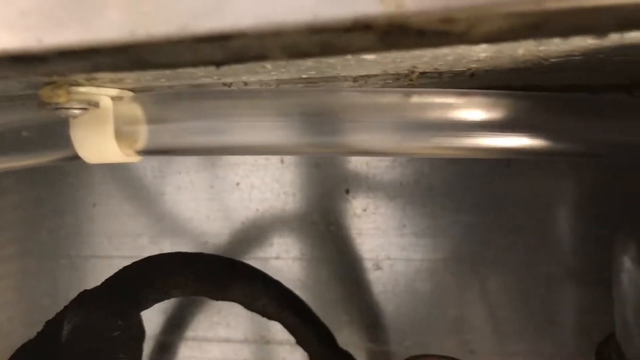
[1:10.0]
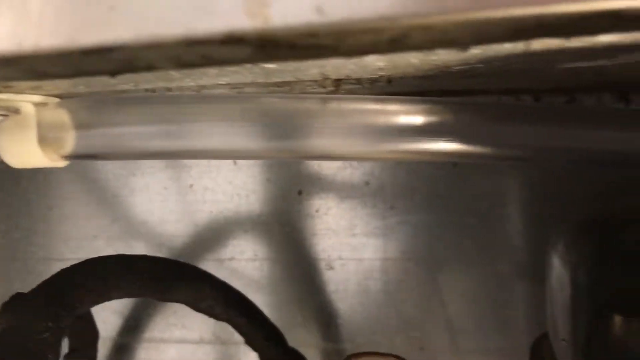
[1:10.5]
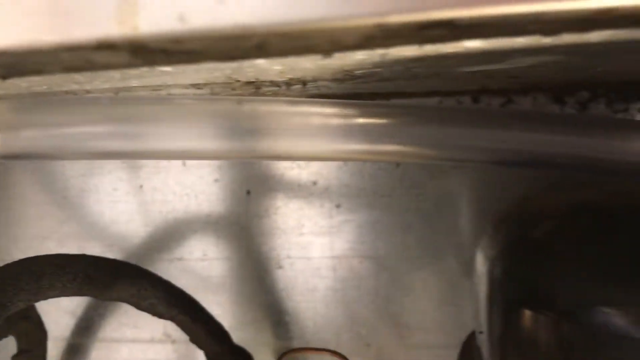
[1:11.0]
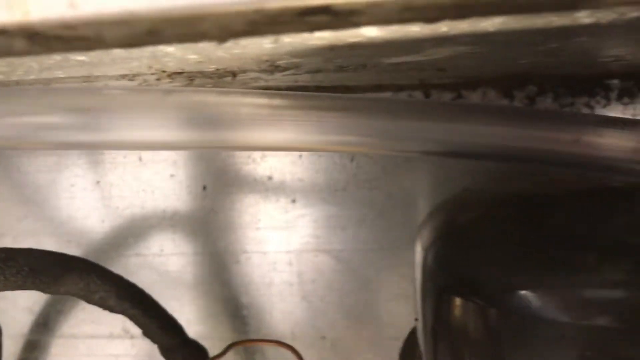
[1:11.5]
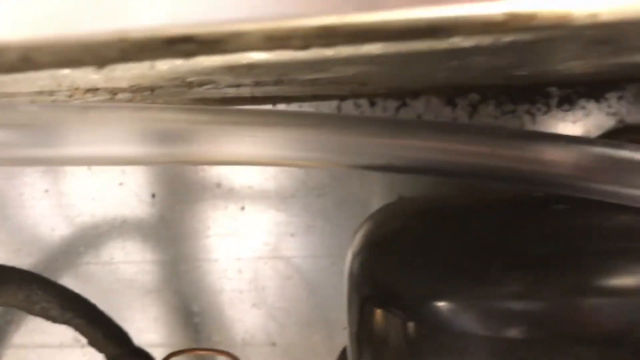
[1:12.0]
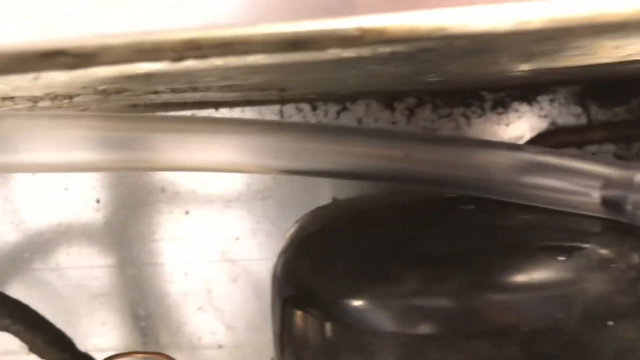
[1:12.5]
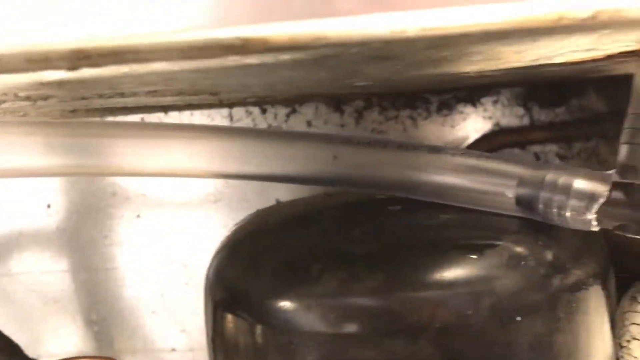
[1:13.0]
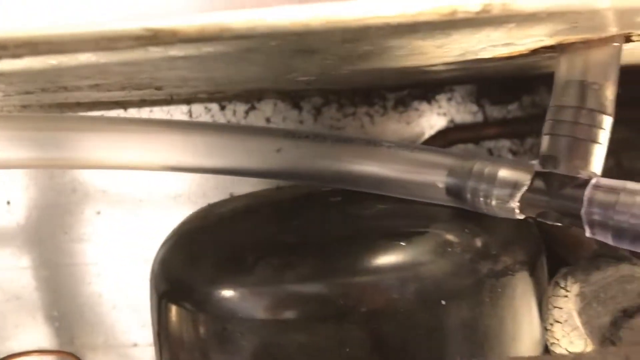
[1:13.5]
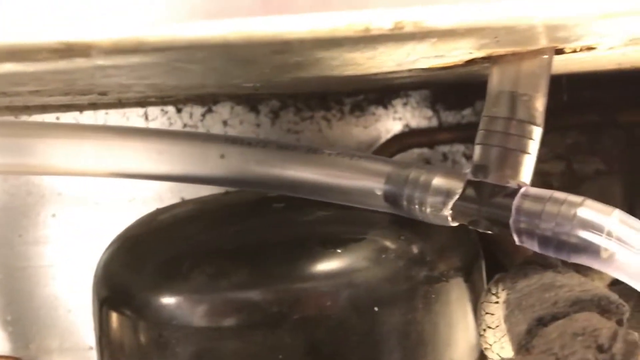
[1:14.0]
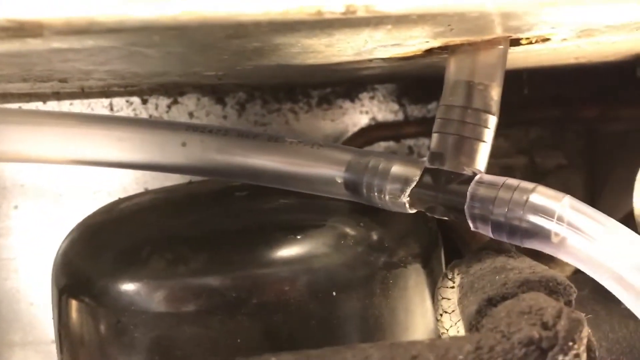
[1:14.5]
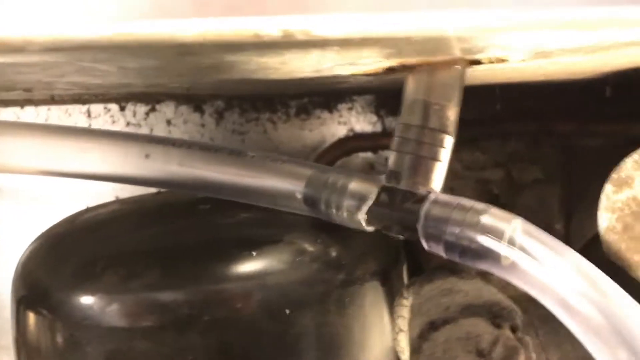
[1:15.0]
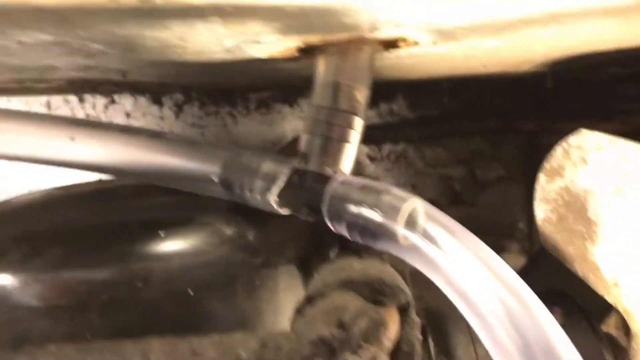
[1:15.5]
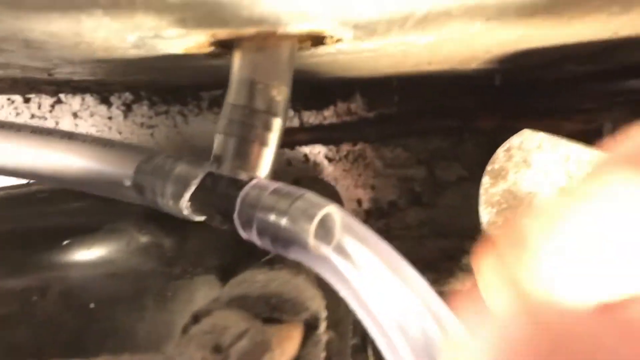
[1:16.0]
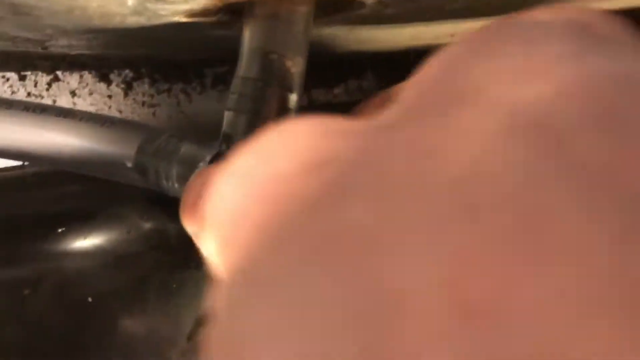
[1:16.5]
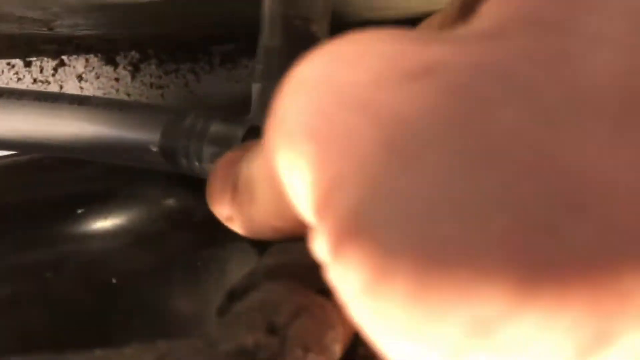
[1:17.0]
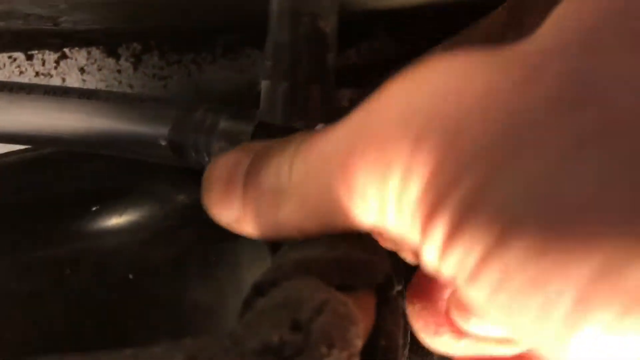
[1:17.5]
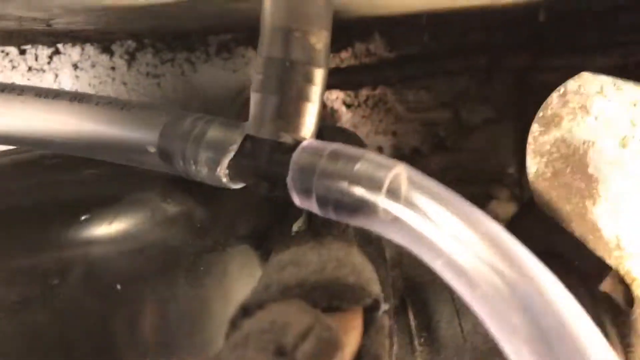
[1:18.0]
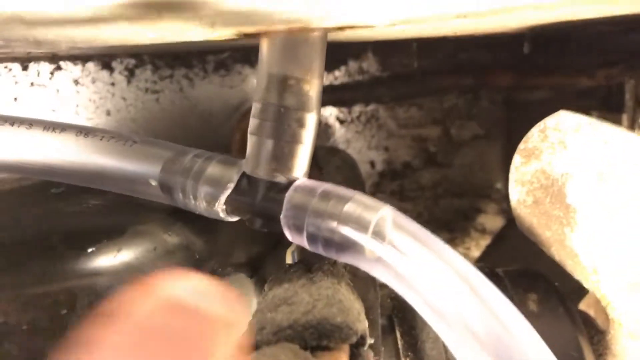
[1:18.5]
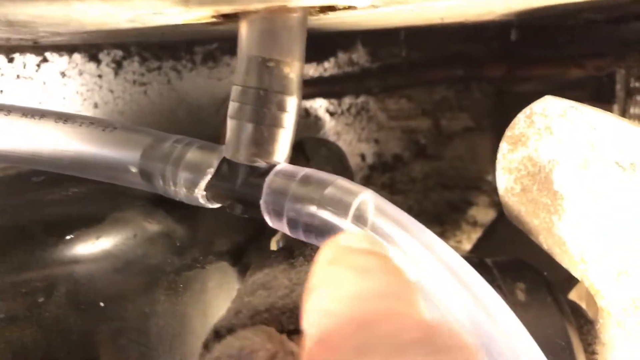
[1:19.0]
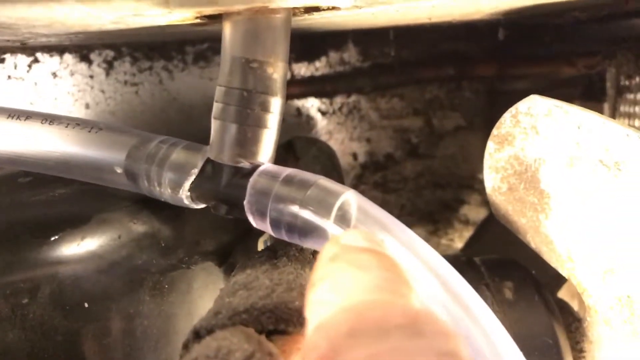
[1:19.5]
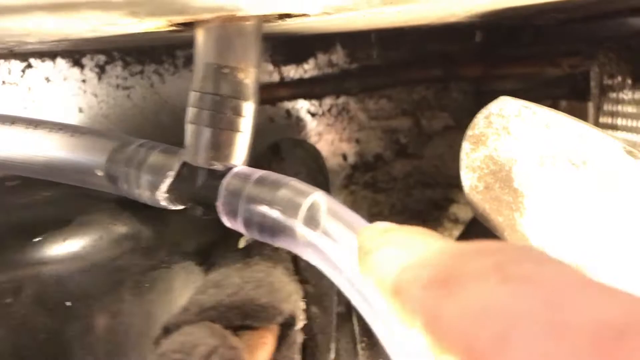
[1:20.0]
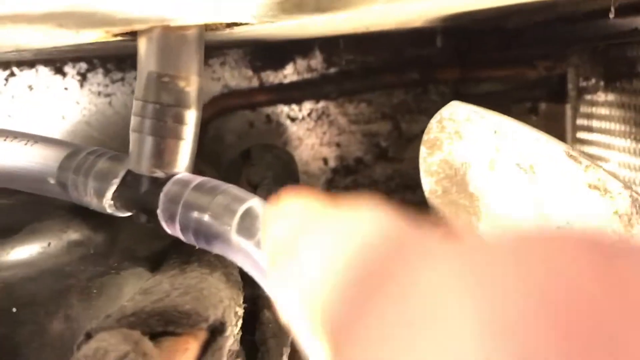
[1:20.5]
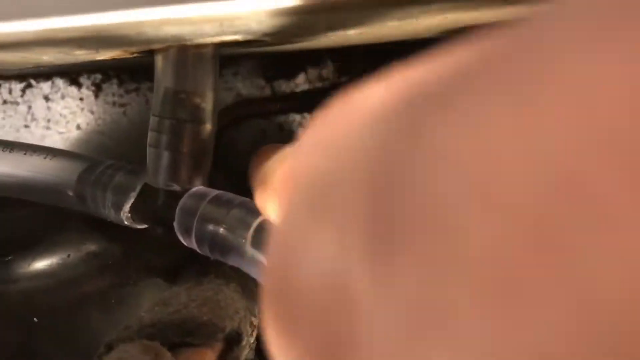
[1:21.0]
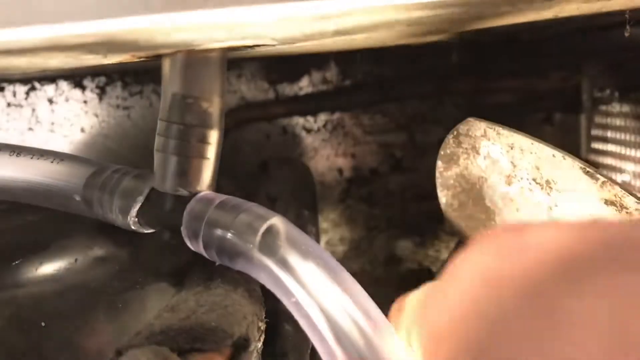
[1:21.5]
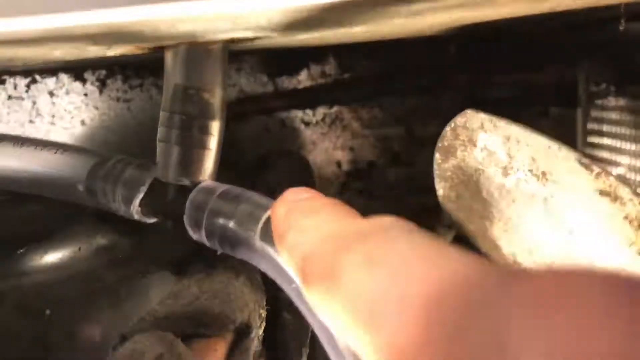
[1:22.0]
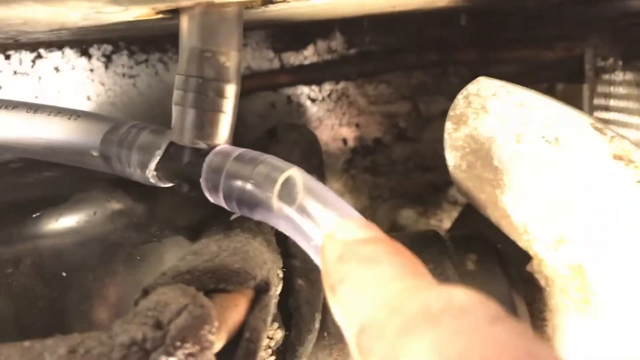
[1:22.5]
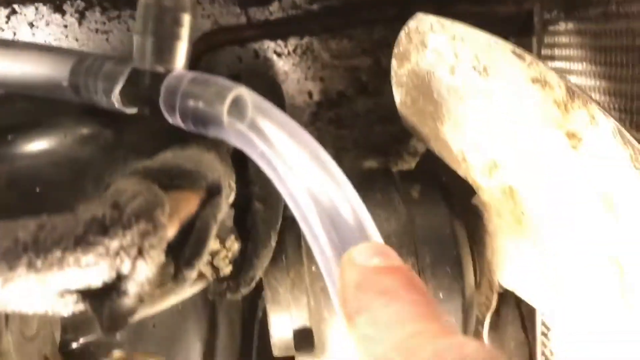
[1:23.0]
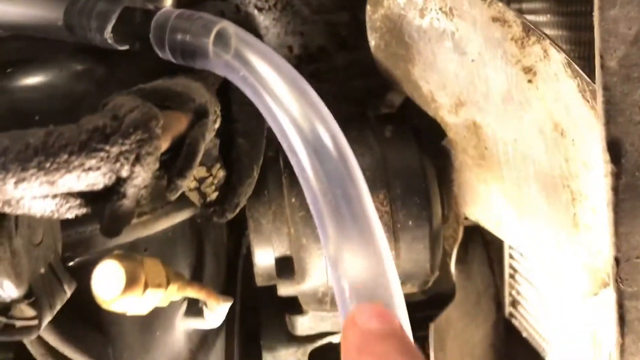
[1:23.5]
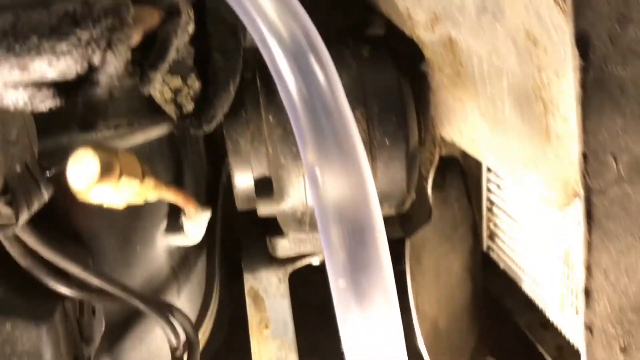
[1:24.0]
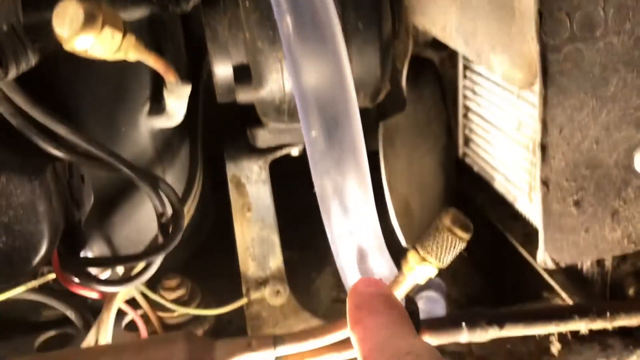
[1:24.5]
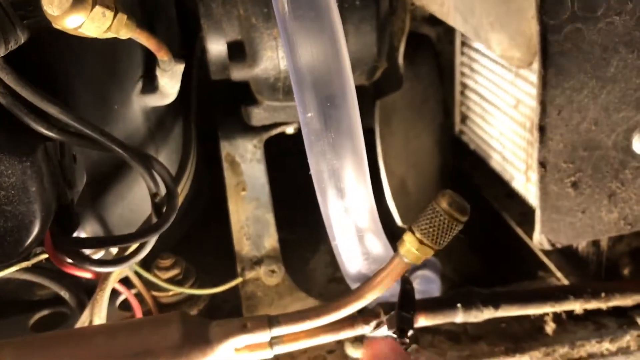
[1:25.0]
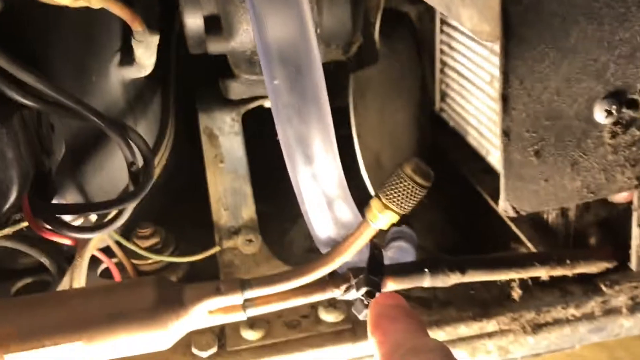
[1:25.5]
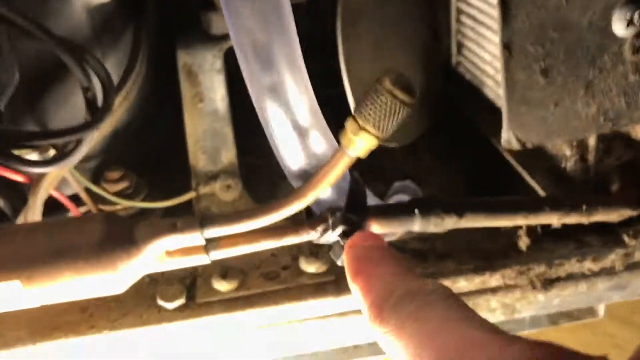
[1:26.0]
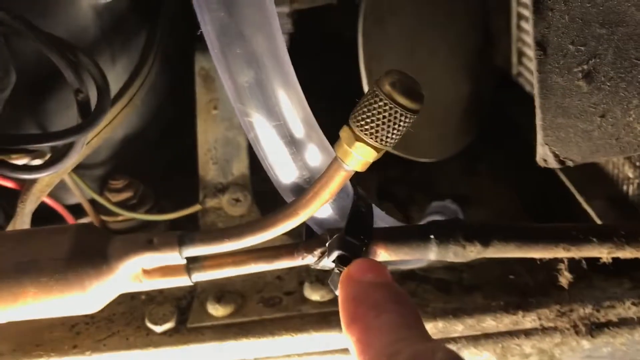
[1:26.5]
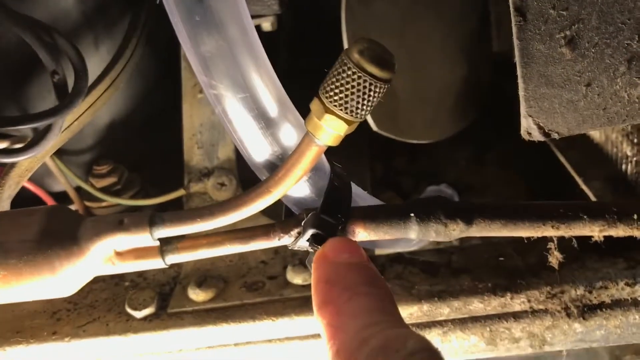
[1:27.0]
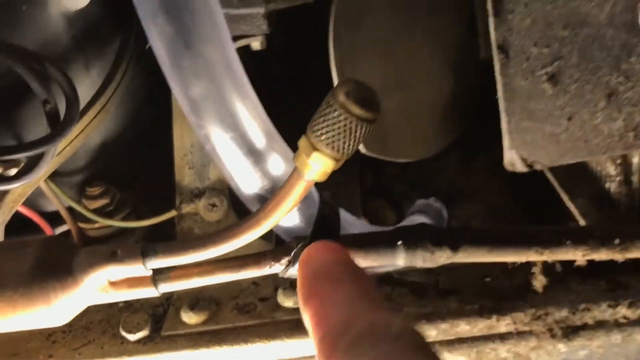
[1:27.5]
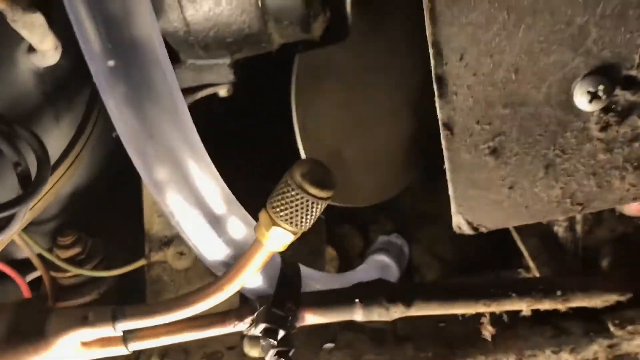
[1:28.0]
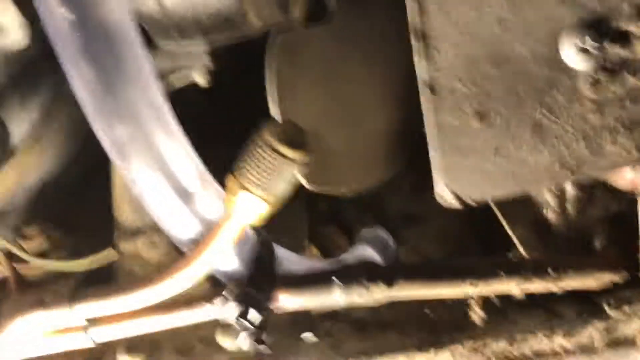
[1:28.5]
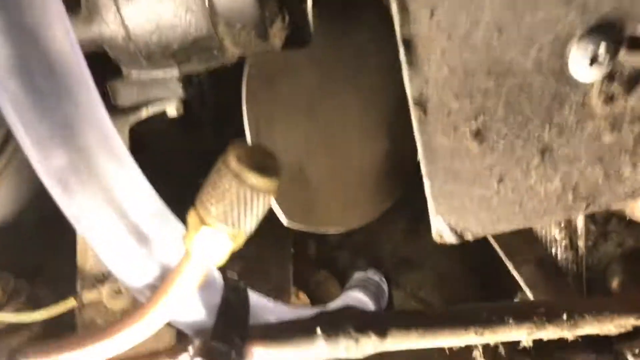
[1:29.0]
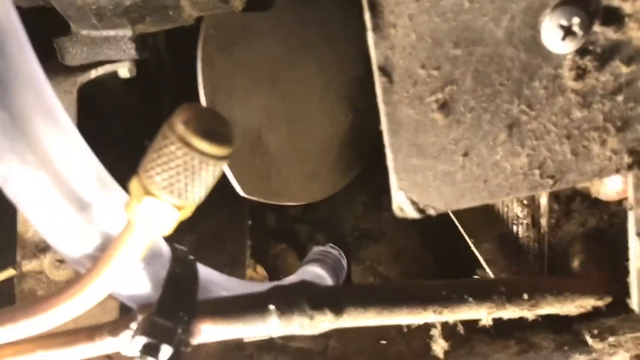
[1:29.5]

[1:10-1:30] The man pans the camera across the clear tube he has just installed in the machine. It has been cut so that it goes into a three-way pipe running straight through and up into the top of the area through the floor or roof of the machine. His hand comes in to pinch, grab and point at the clear tube, then he points downward and follows the tube with his finger. He shows where he tied it to another pipe with a zap strap, and it goes down below where the fan was located. The pipe leads underneath that area, and he shows the whole route of the new clear pipe he installed in the machine.